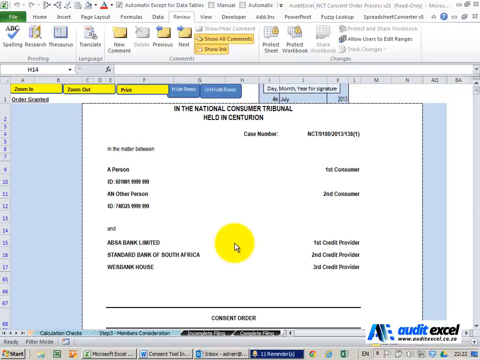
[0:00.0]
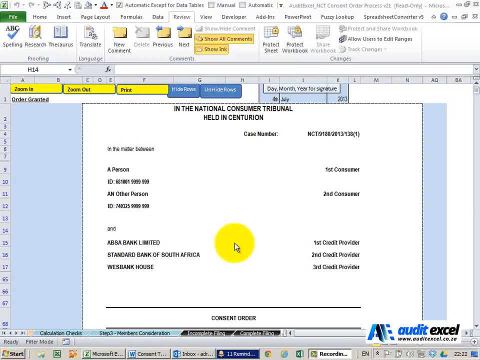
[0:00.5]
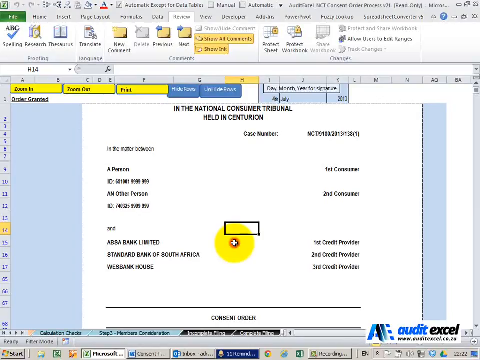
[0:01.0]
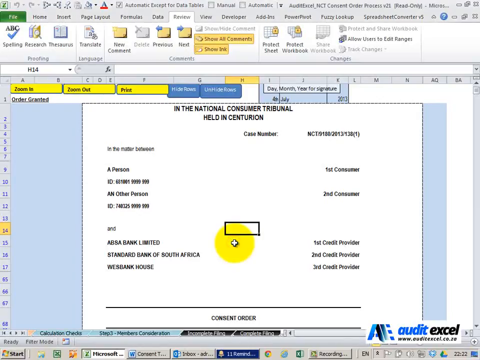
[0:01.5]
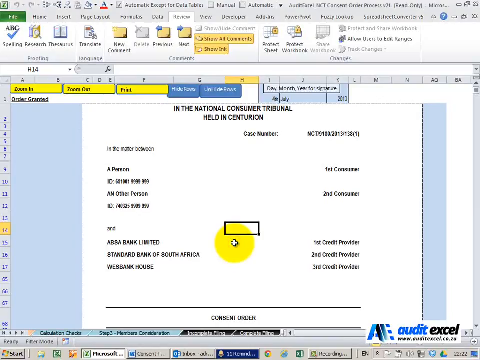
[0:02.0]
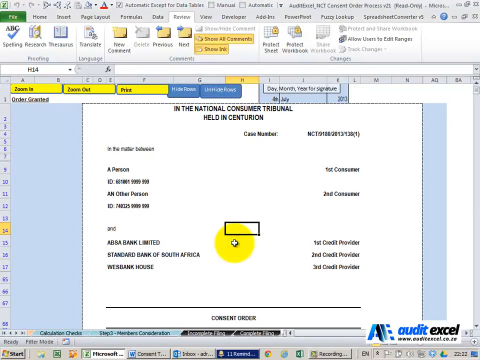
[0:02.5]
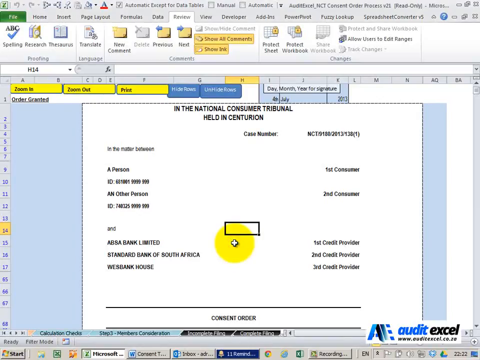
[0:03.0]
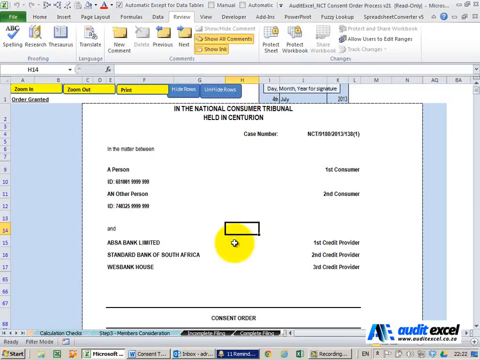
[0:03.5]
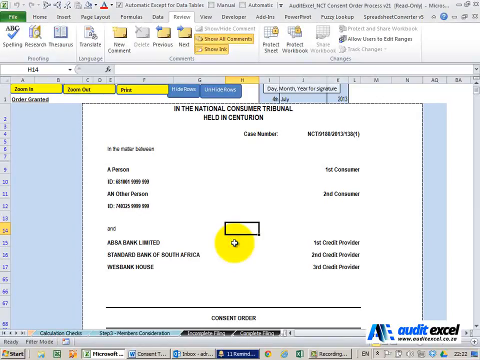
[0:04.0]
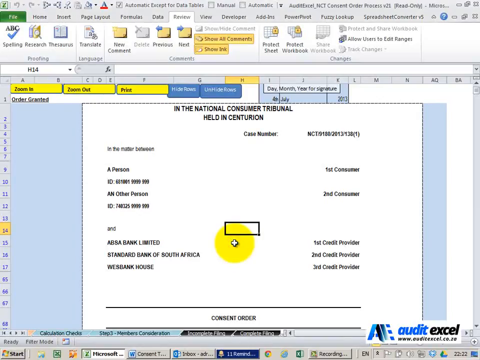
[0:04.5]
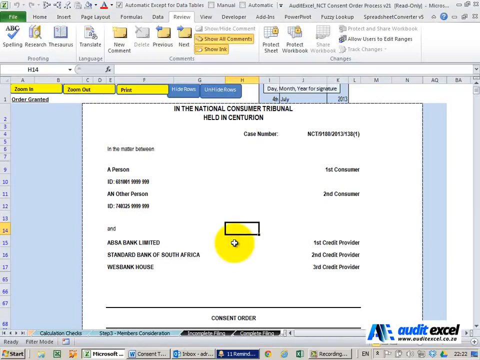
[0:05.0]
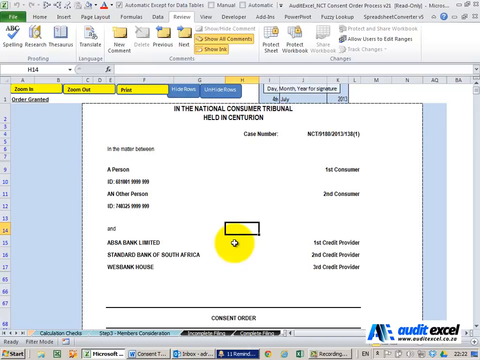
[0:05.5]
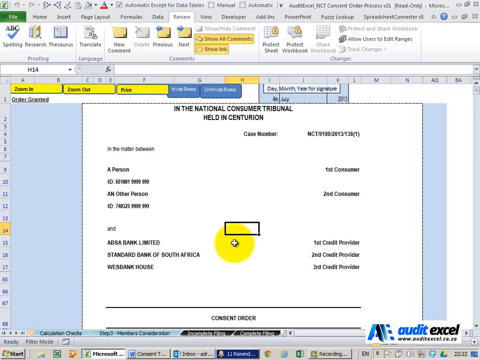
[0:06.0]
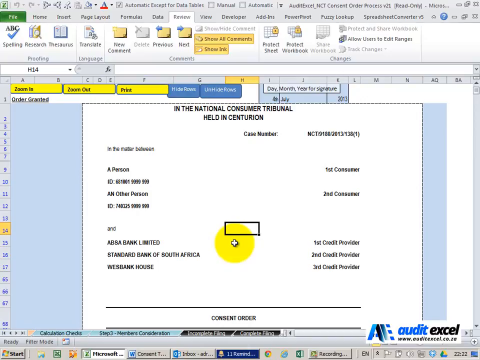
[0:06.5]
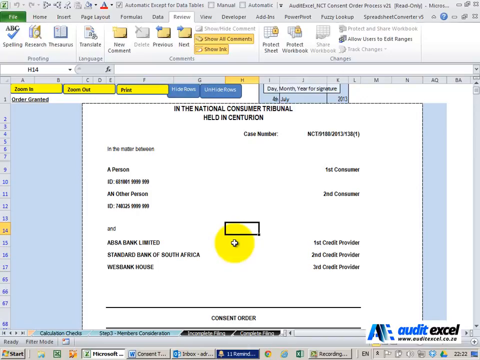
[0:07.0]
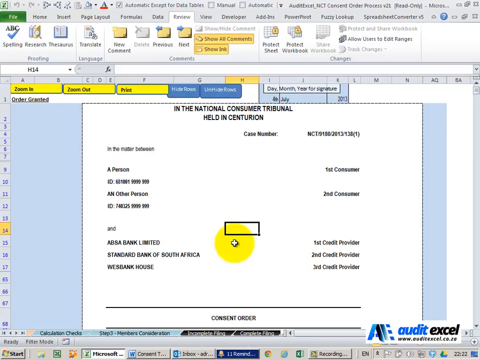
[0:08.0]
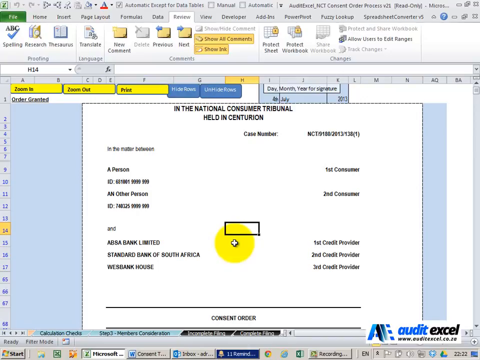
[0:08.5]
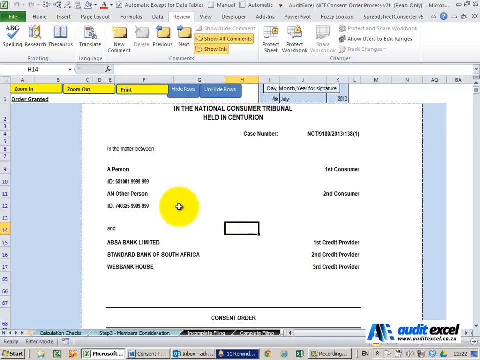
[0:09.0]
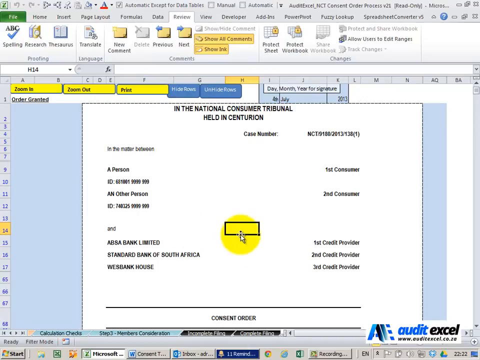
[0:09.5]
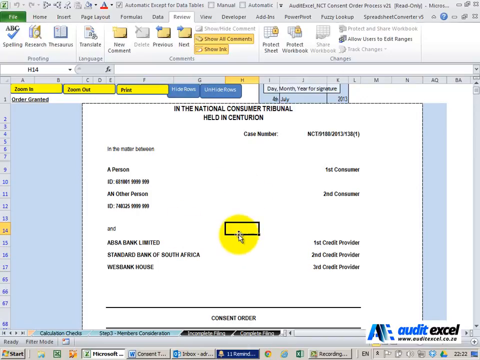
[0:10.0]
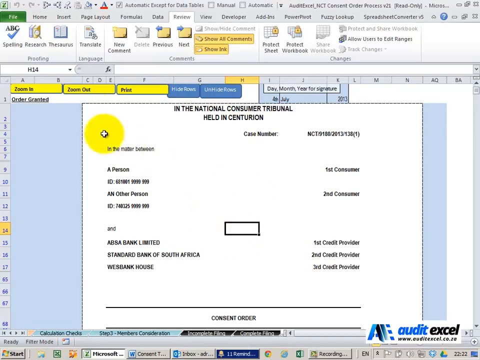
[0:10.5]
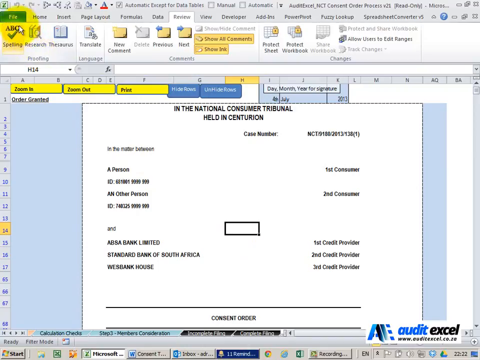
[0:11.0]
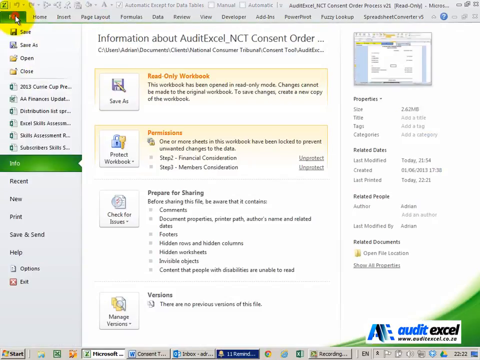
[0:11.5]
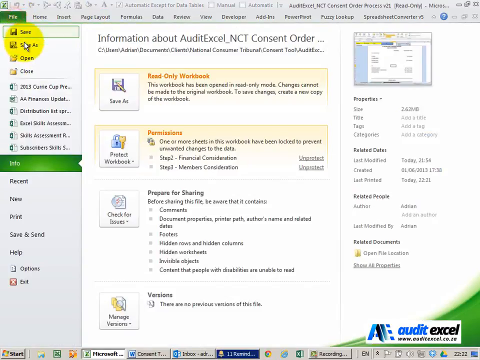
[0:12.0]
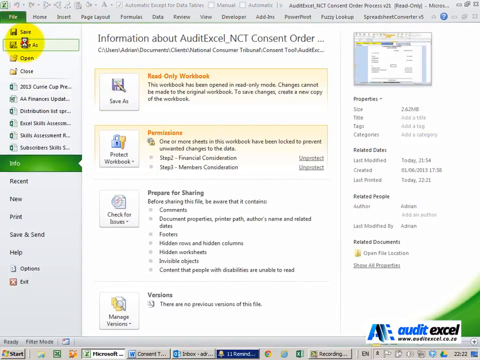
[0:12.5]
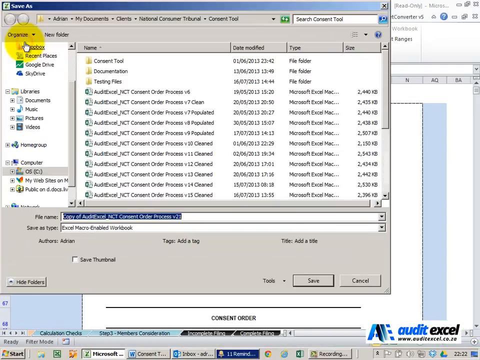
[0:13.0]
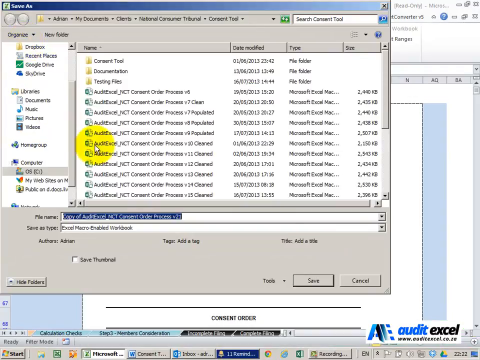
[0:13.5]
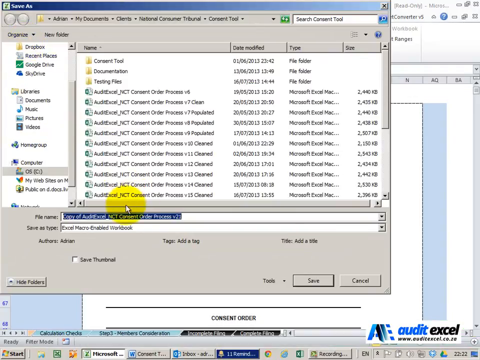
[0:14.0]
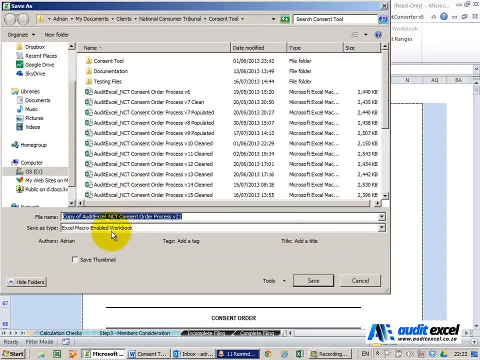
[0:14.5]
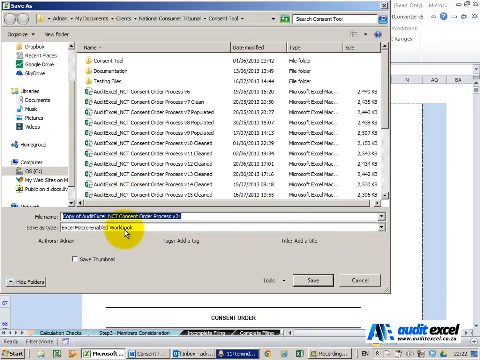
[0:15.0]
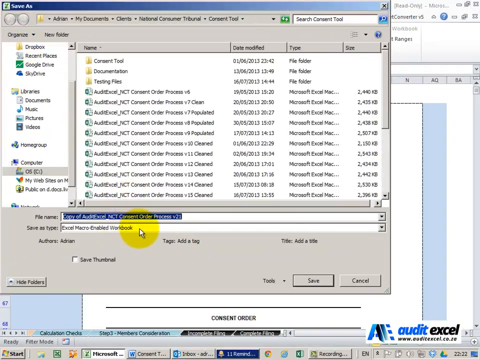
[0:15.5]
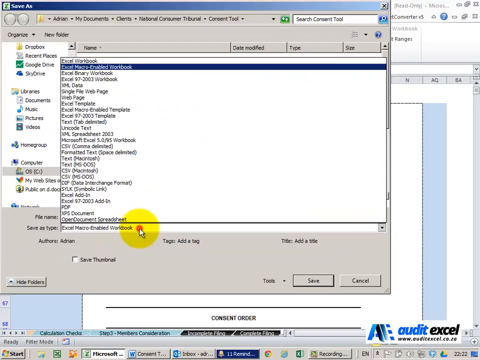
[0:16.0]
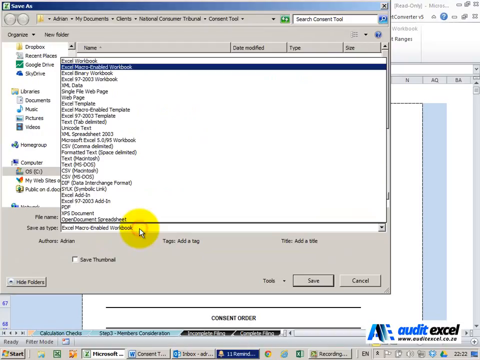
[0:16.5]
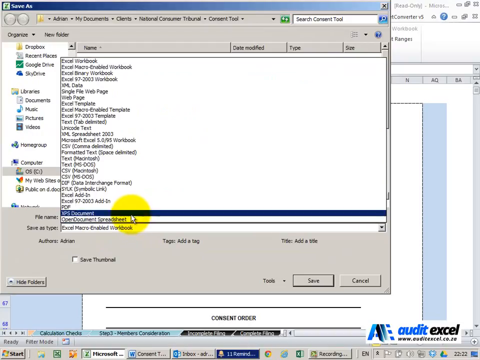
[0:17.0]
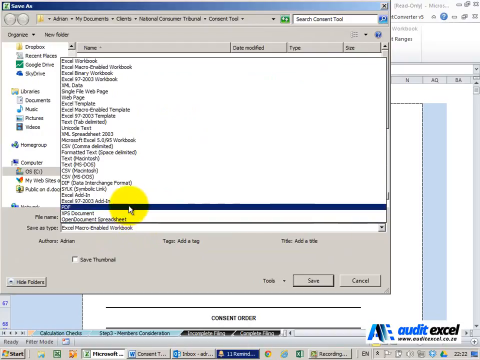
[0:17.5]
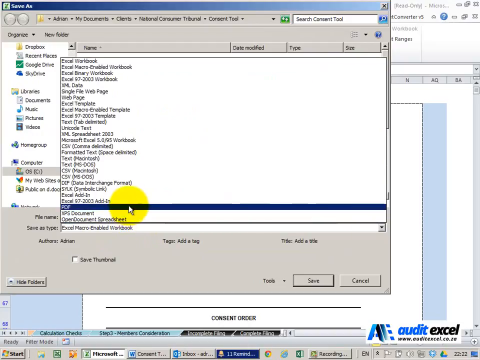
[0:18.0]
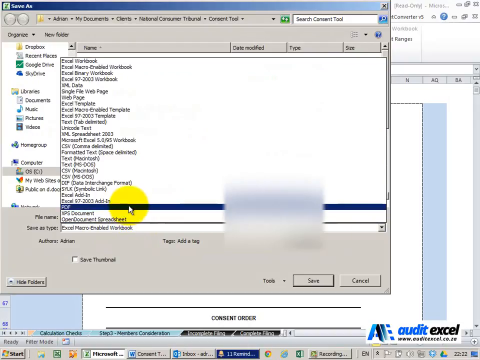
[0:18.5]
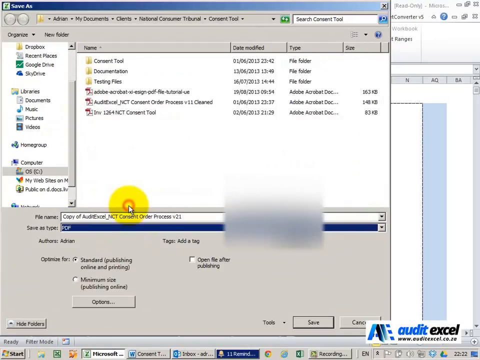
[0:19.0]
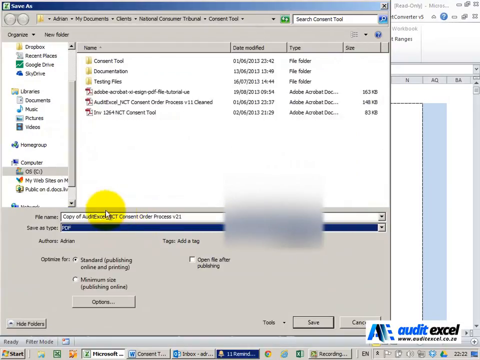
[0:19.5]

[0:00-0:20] A site titled "National Consumer Tribunal, Held In Centurion" is shown. The user moves the mouse pointer around and searches through various files; the text is too small to read at this window size, so what they are looking for is unclear. A yellow spot surrounds the mouse pointer to keep track of where it points. At the bottom there is a logo reading "Audit Excel".